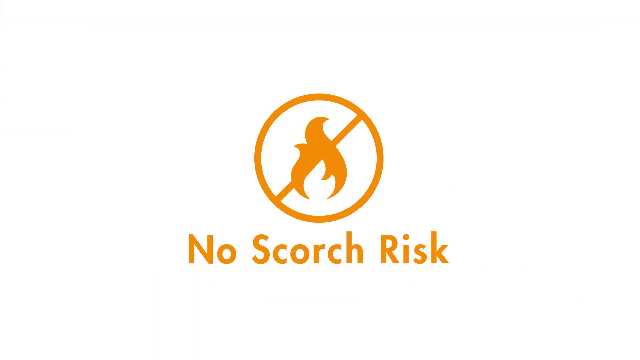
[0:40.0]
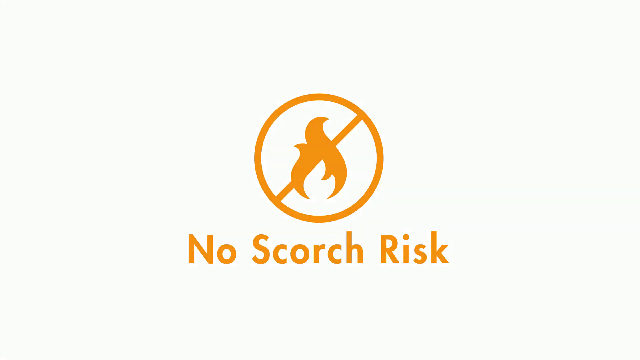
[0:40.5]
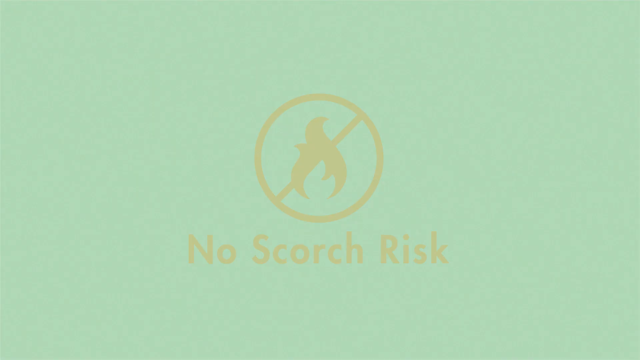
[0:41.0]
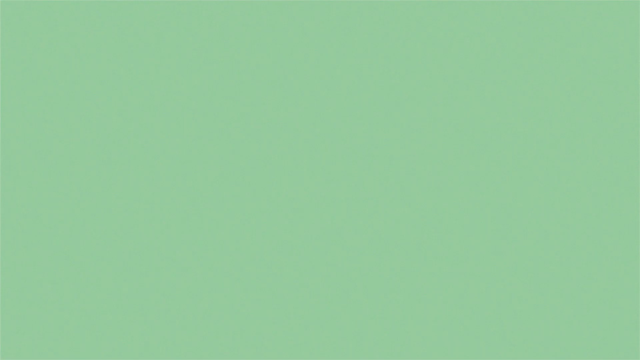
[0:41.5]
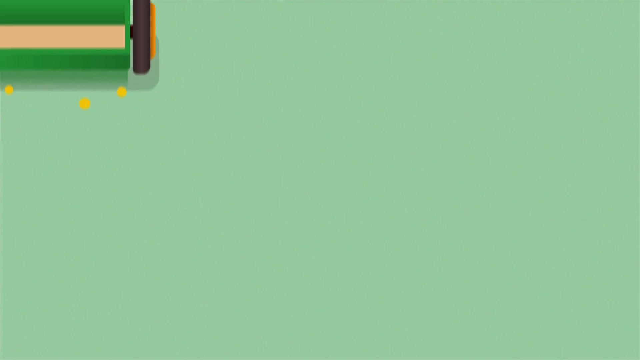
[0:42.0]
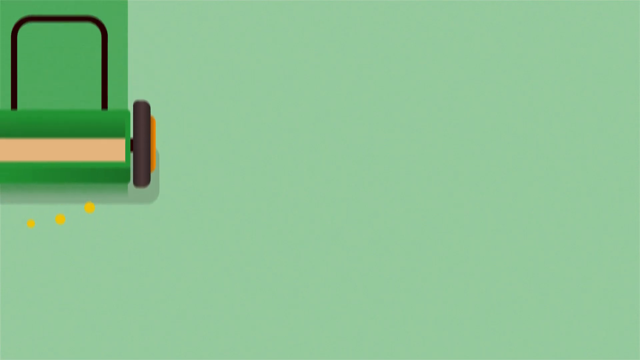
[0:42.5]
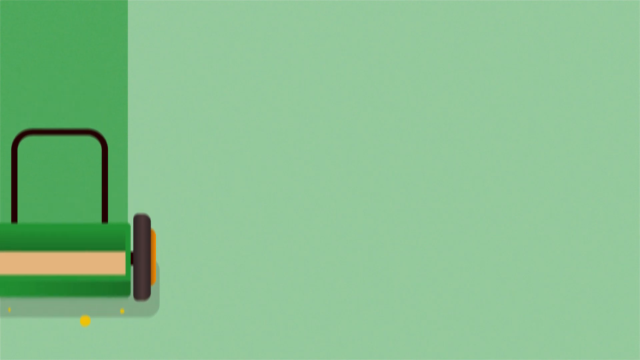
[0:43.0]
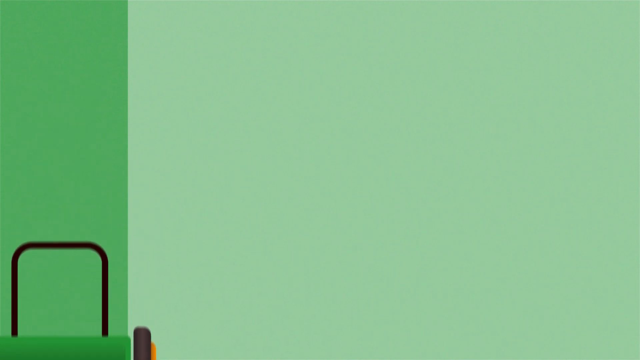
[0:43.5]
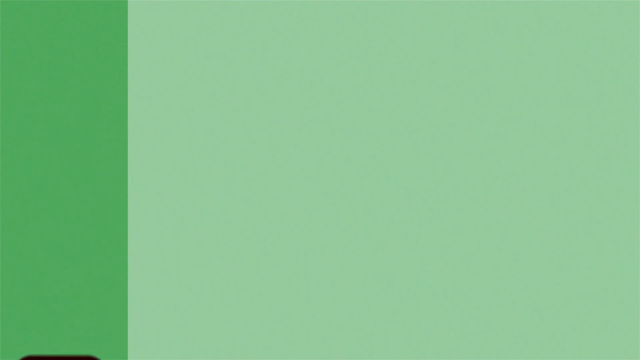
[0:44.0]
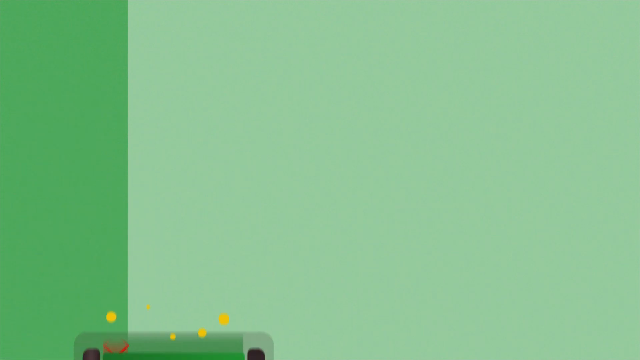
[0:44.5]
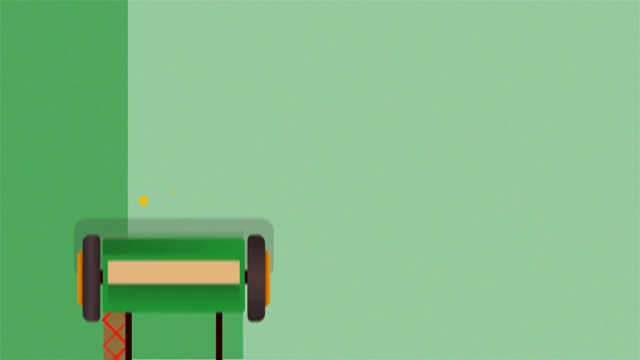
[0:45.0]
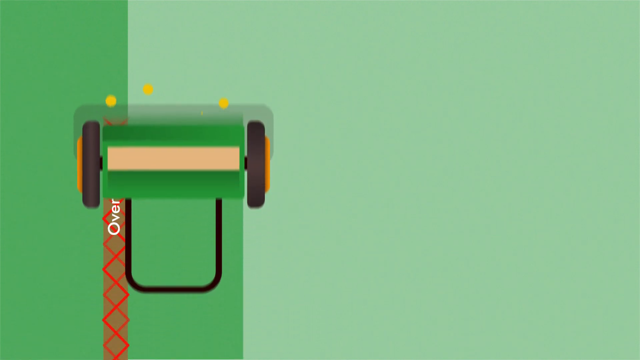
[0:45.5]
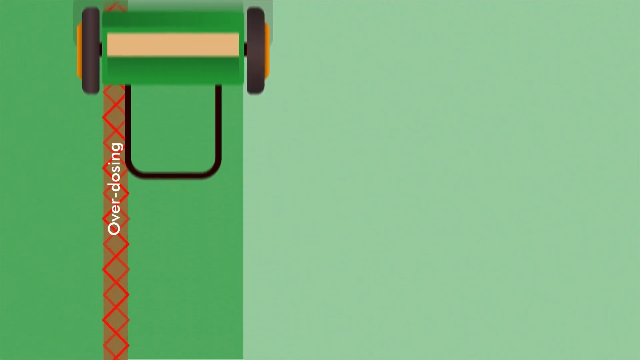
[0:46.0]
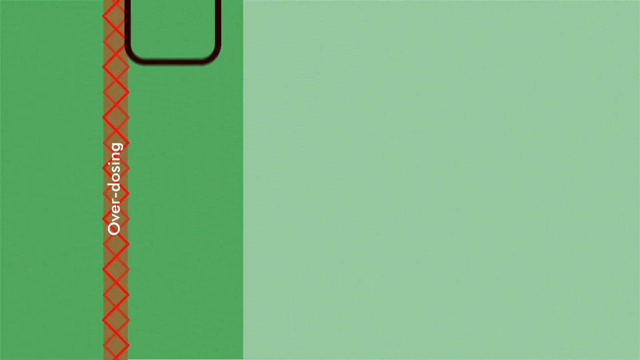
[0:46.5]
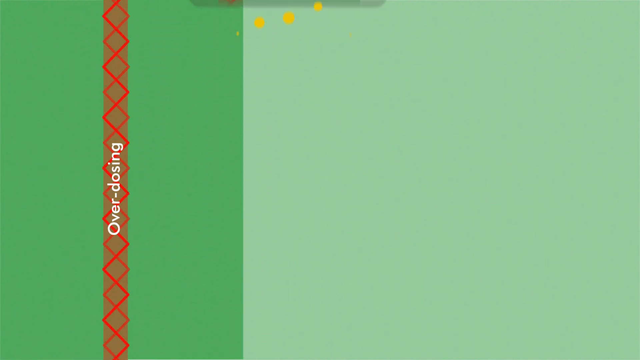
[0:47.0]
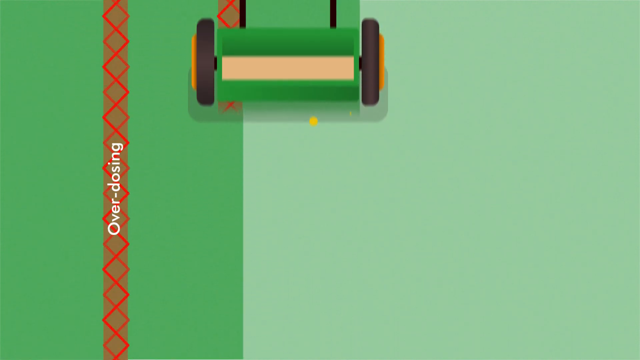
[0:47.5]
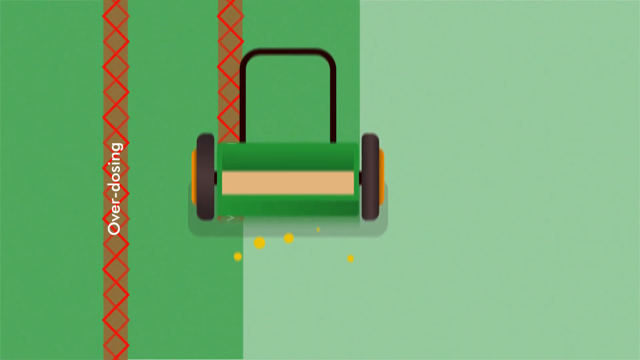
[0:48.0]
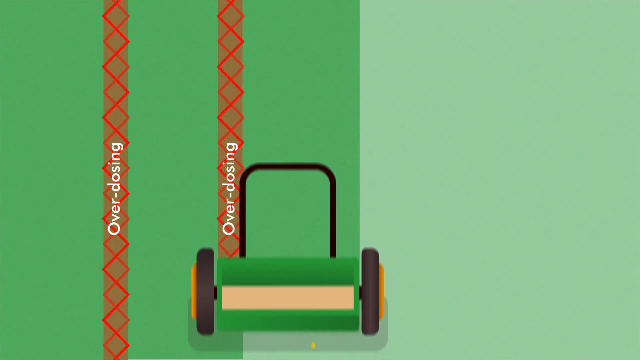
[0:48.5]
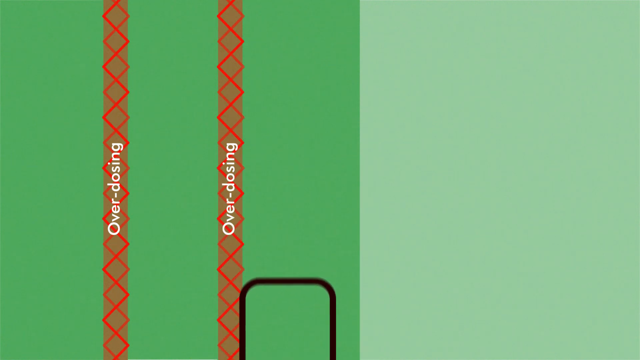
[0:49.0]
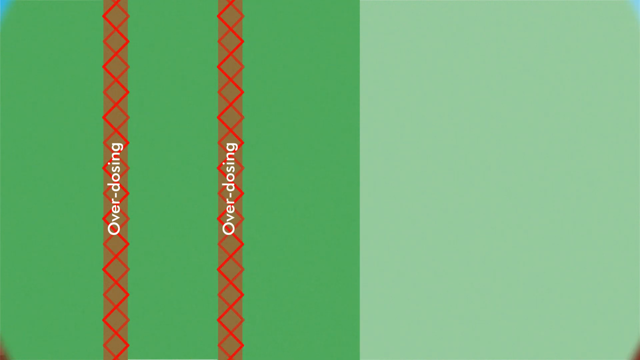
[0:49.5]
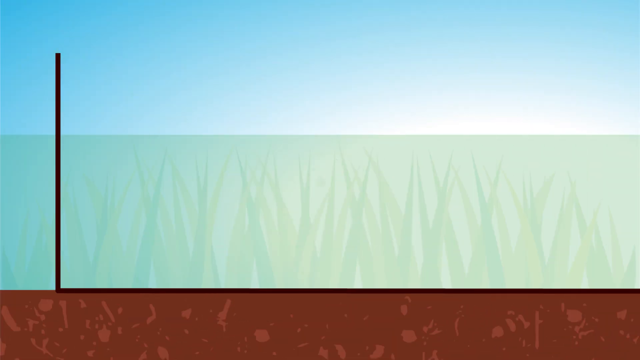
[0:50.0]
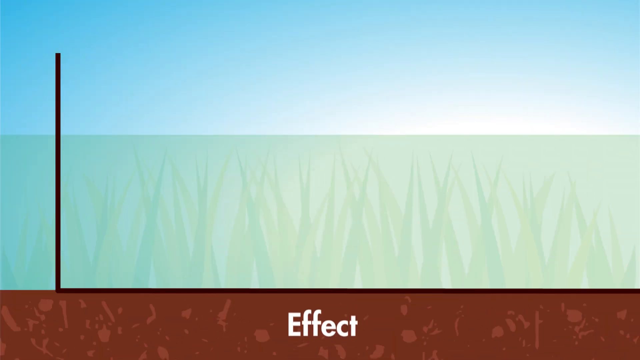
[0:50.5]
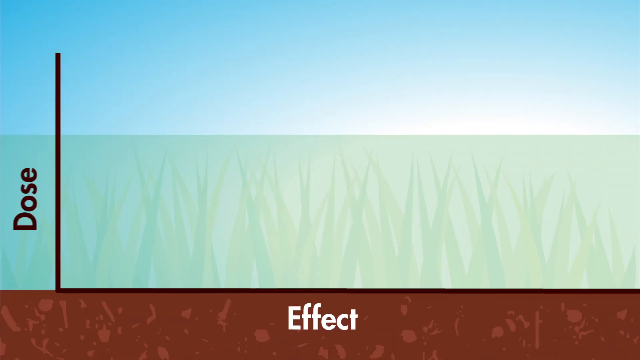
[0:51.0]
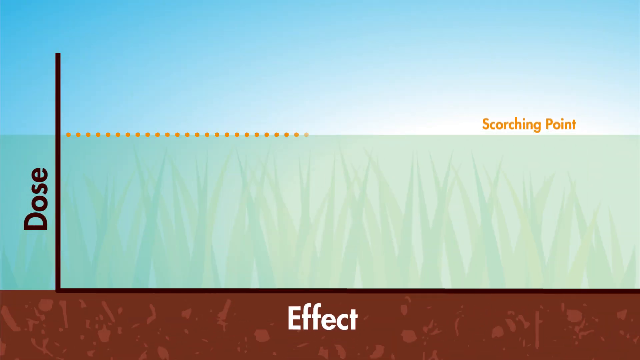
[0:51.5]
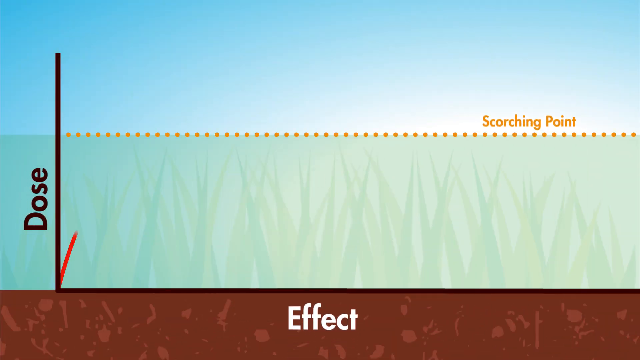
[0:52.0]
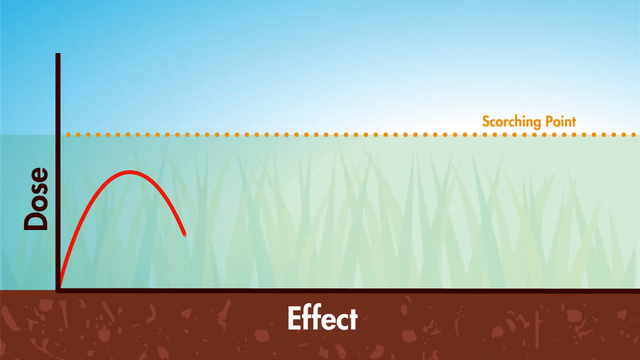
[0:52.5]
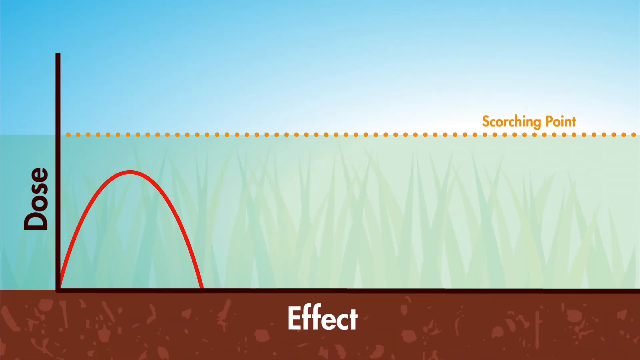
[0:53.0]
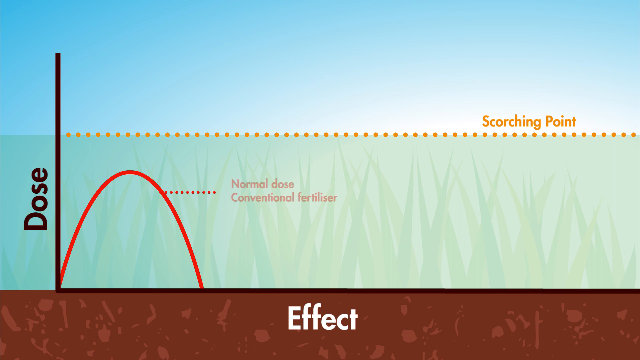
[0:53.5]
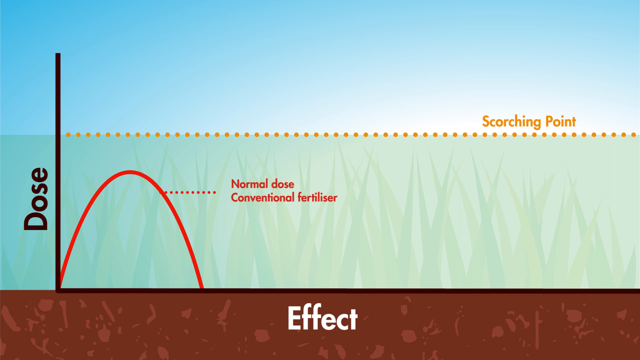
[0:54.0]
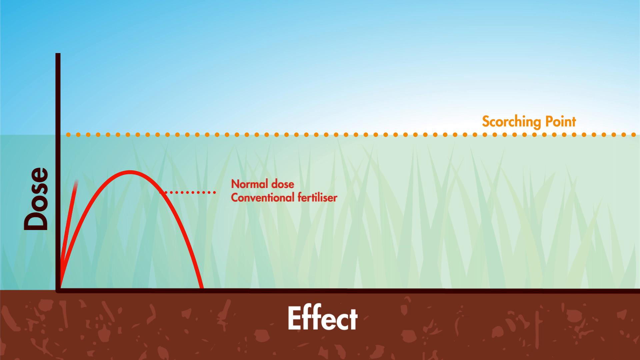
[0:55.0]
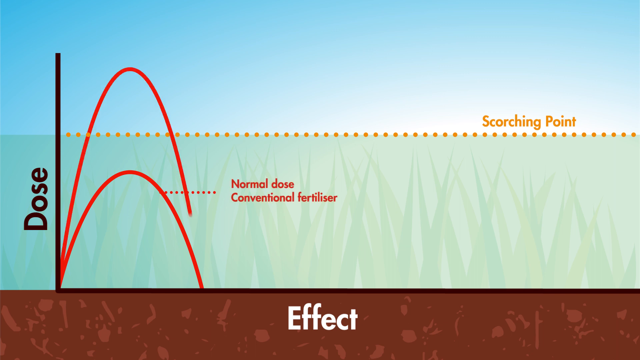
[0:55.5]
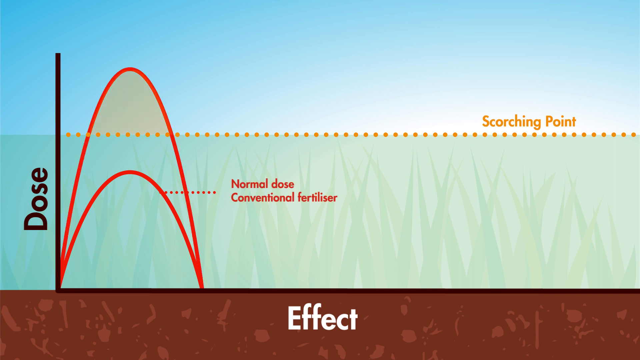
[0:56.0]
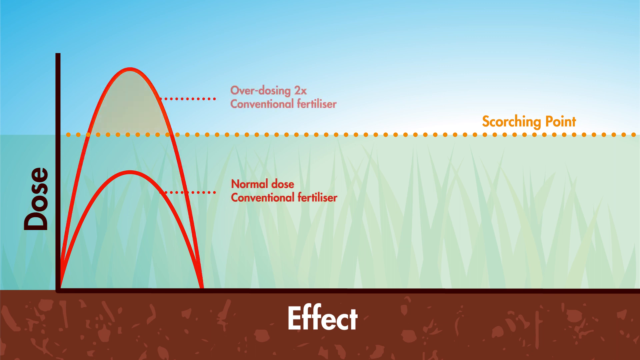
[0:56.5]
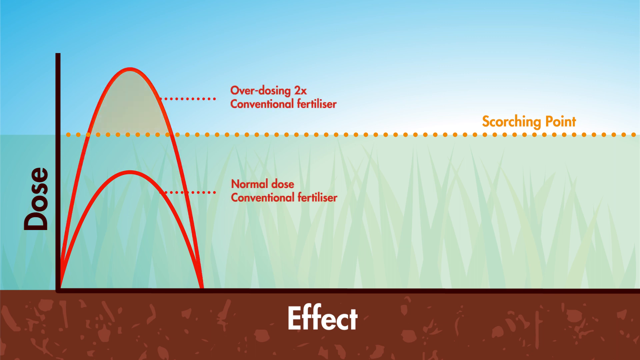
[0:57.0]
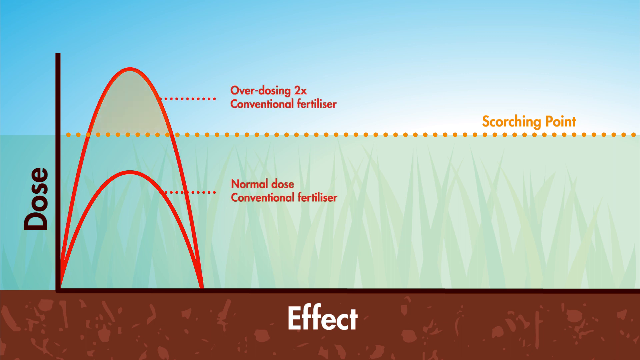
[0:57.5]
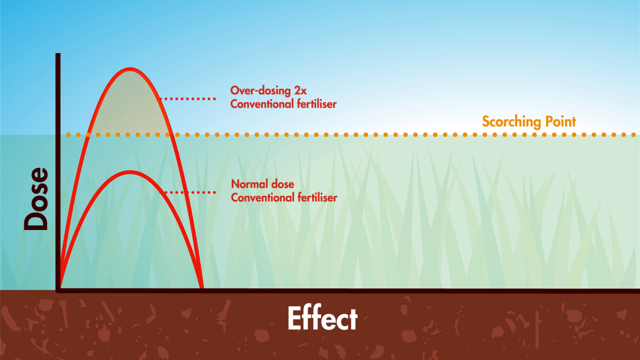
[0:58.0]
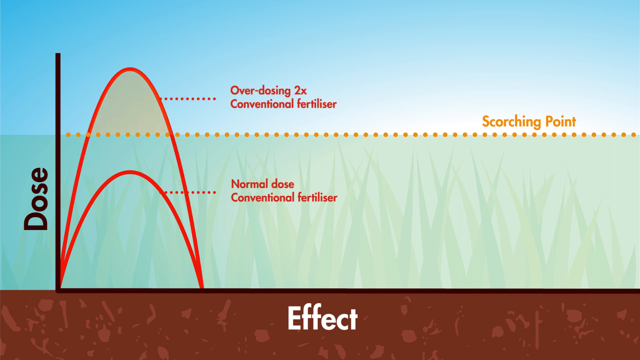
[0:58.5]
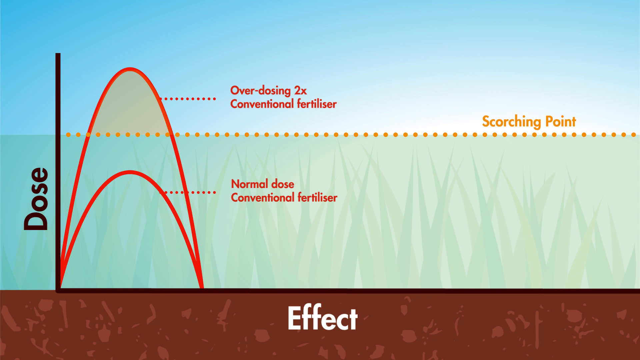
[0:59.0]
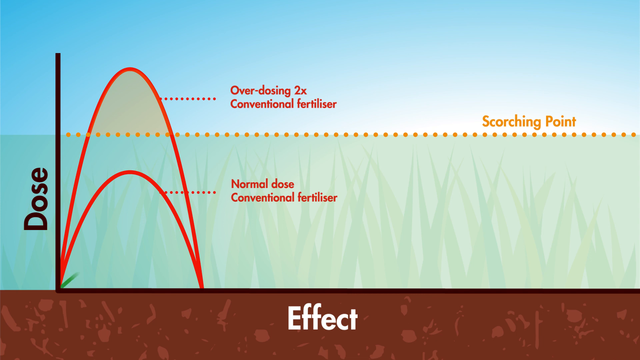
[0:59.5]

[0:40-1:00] The video shows that safe lawn is child and pet friendly. It then compares growth between conventional fertiliser and safe lawn: the lawn with conventional fertiliser grows excessively compared with the one on safe lawn, and conventional fertiliser at a normal dose is much higher than safe lawn.